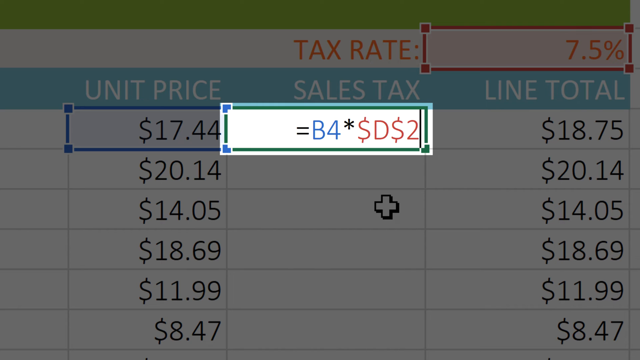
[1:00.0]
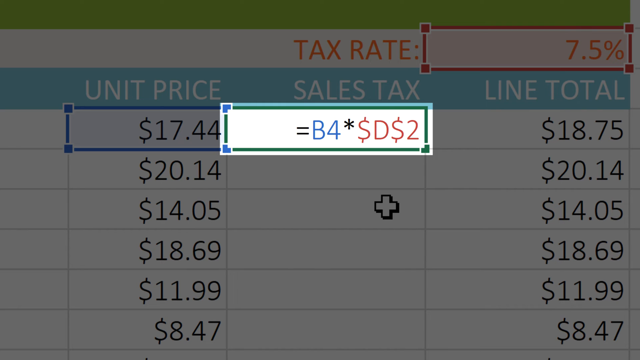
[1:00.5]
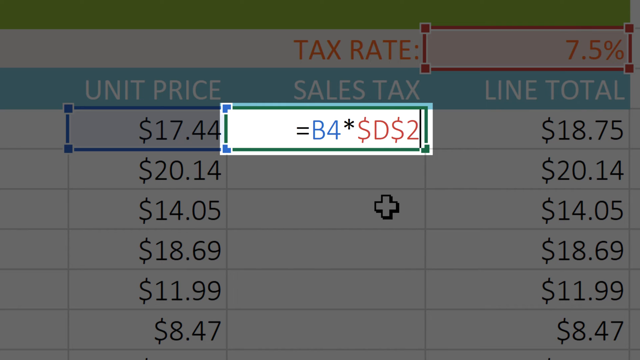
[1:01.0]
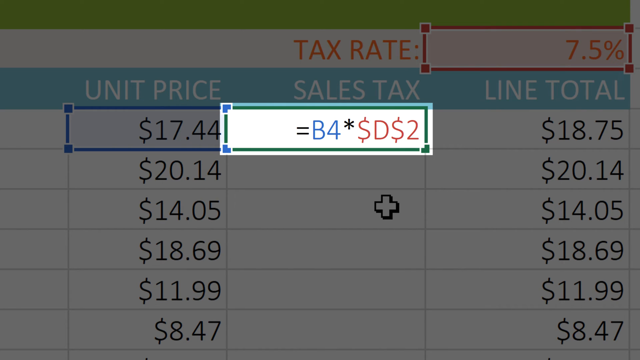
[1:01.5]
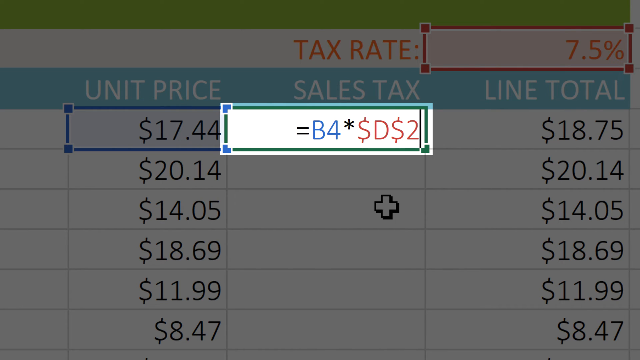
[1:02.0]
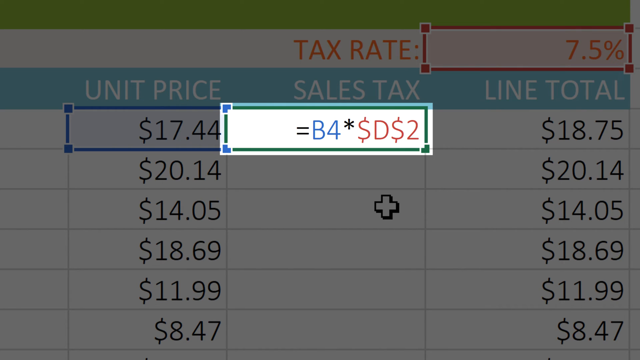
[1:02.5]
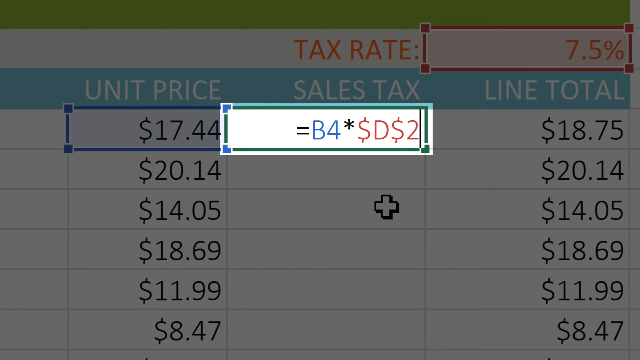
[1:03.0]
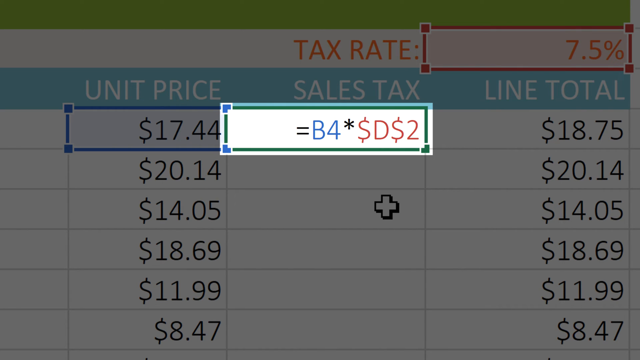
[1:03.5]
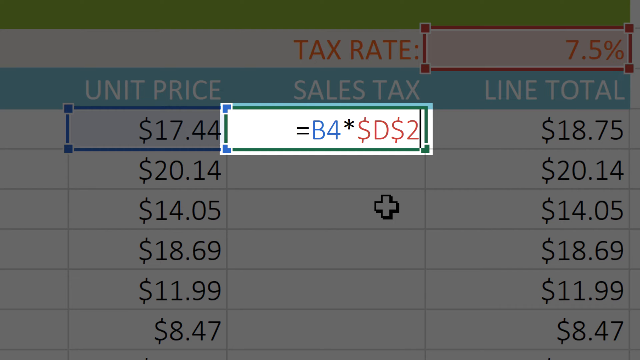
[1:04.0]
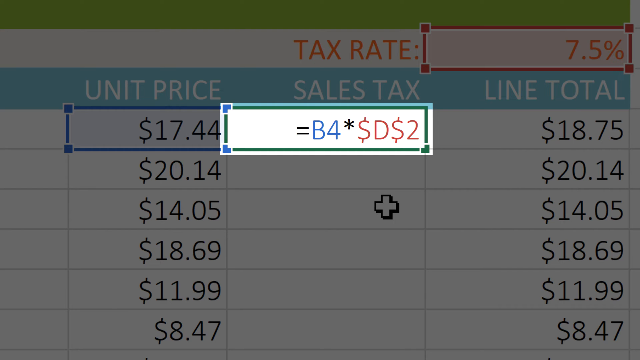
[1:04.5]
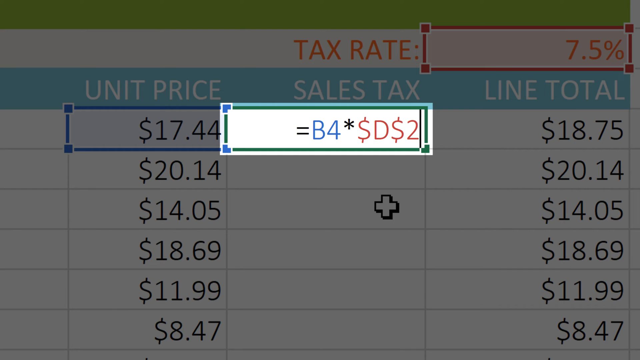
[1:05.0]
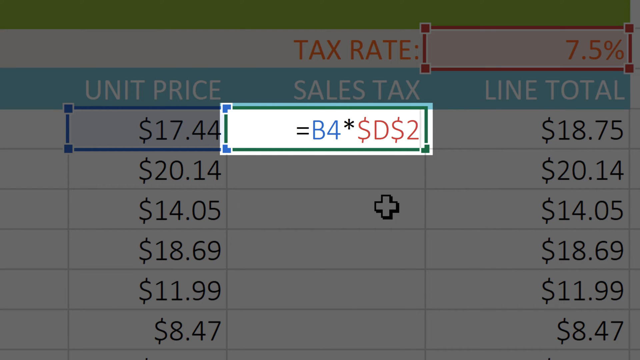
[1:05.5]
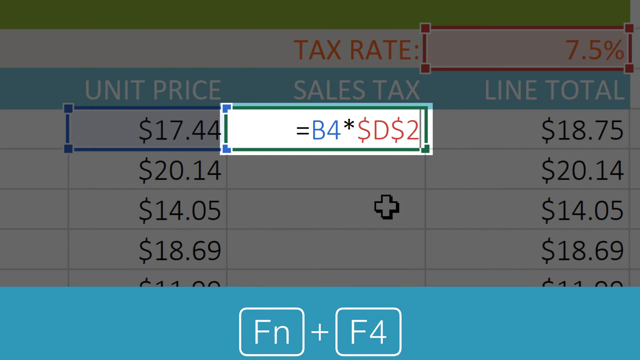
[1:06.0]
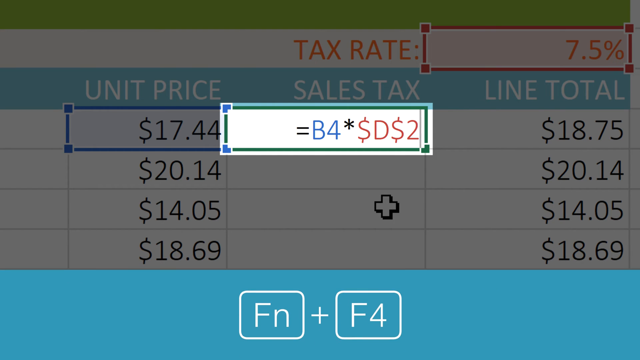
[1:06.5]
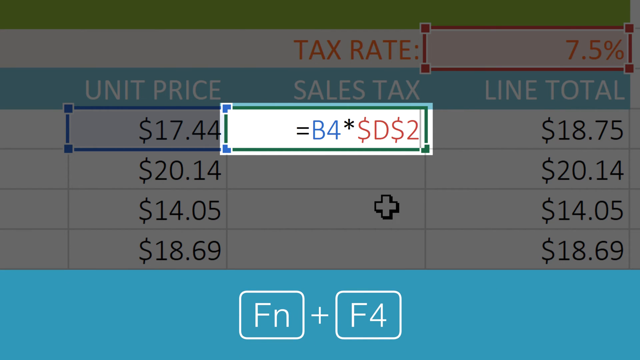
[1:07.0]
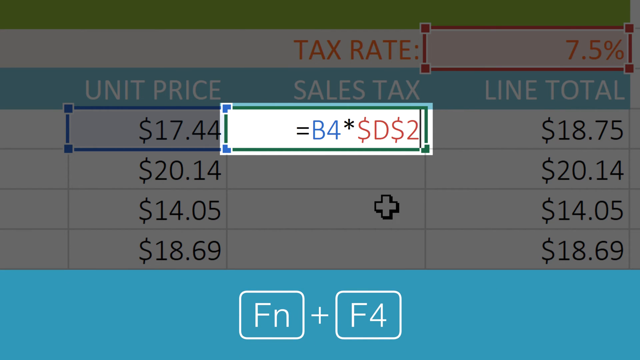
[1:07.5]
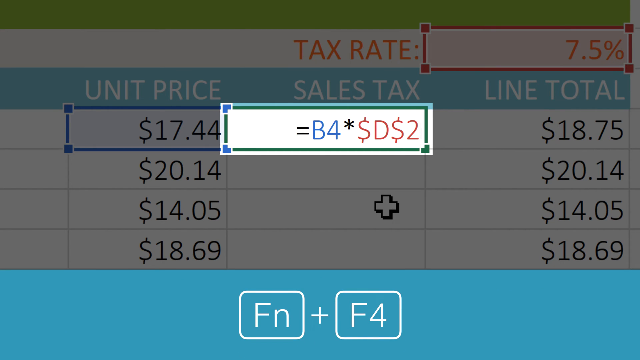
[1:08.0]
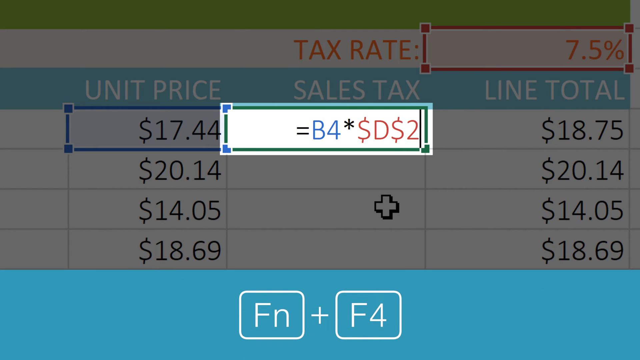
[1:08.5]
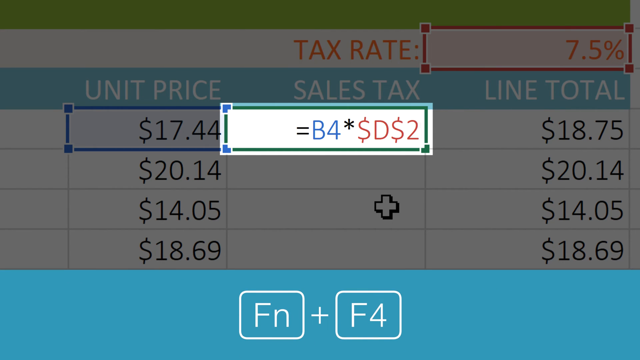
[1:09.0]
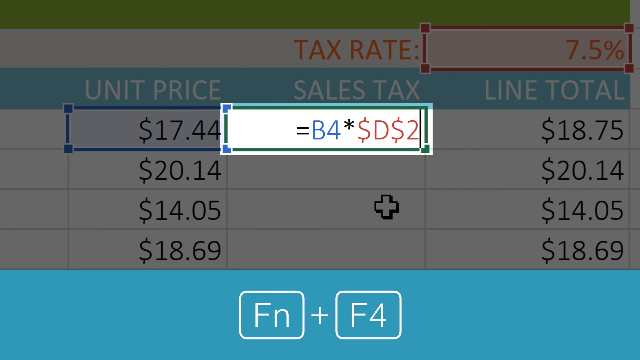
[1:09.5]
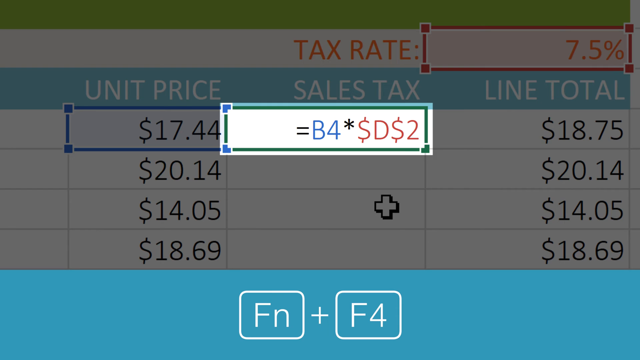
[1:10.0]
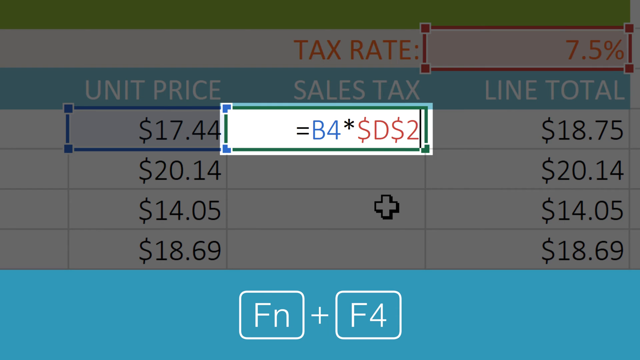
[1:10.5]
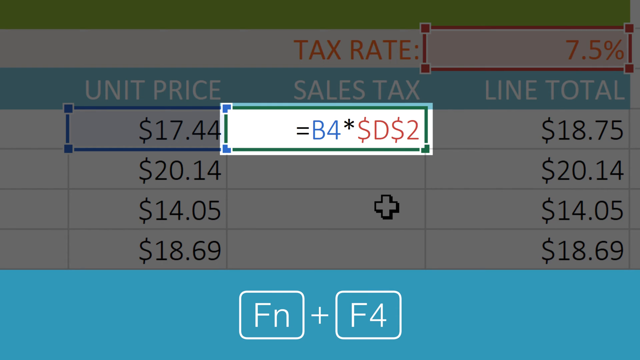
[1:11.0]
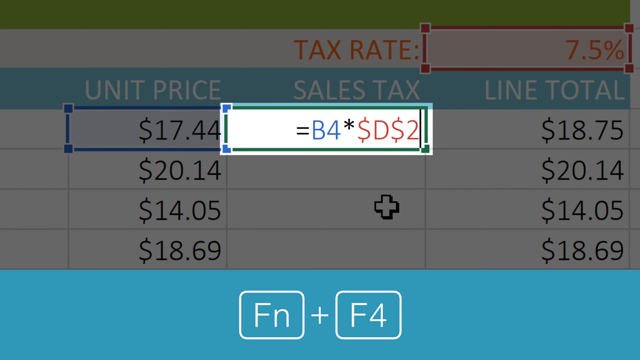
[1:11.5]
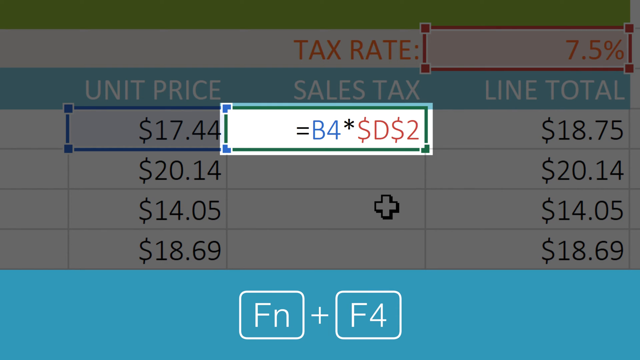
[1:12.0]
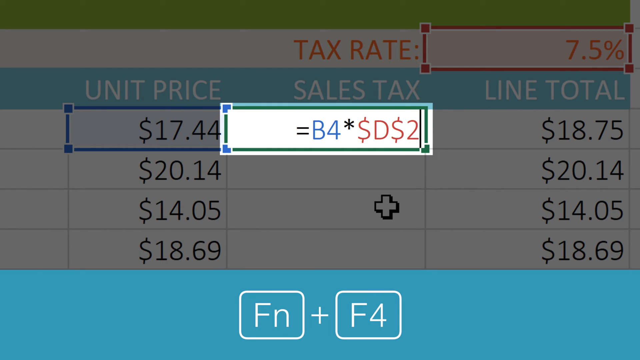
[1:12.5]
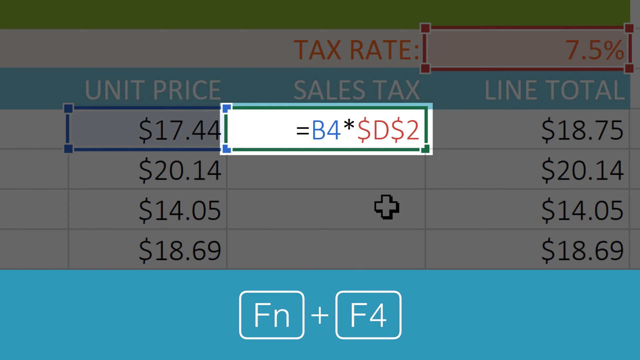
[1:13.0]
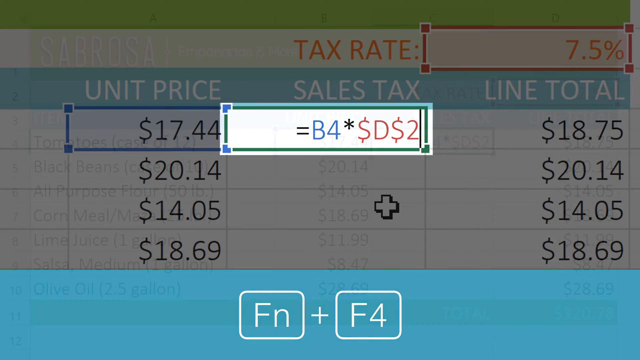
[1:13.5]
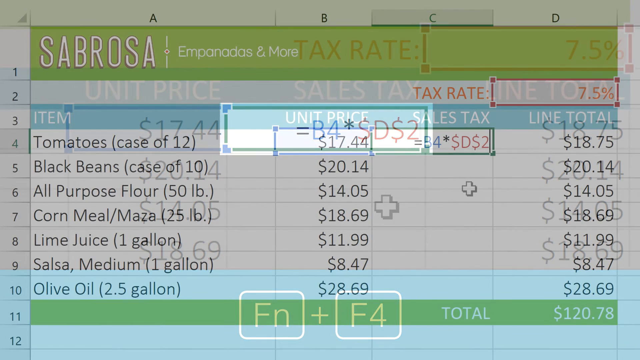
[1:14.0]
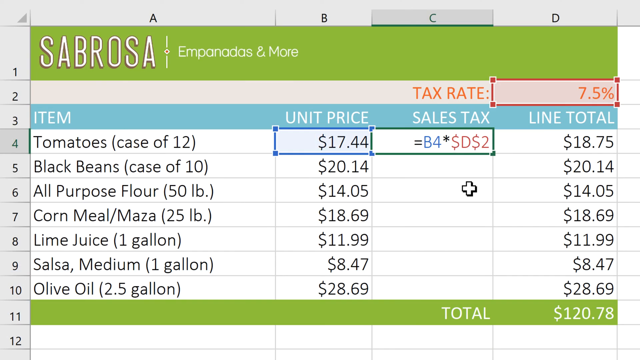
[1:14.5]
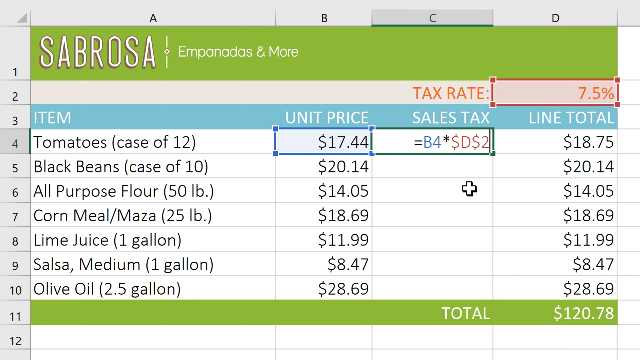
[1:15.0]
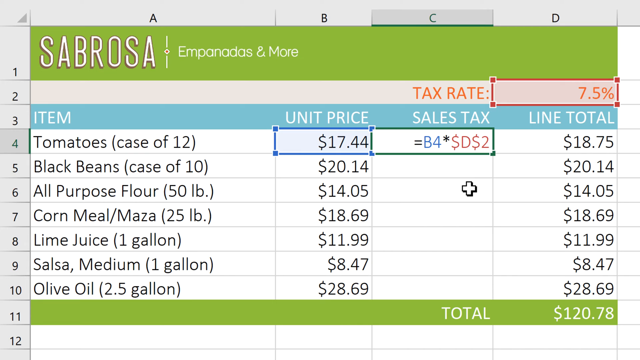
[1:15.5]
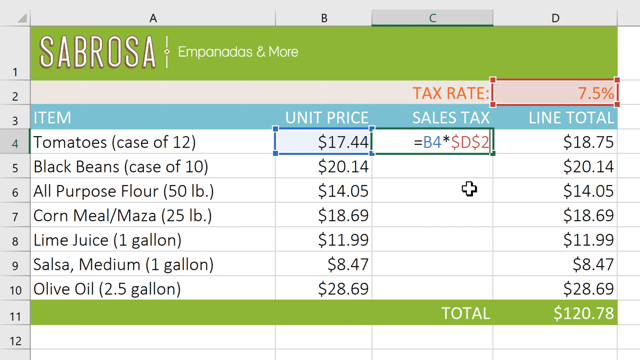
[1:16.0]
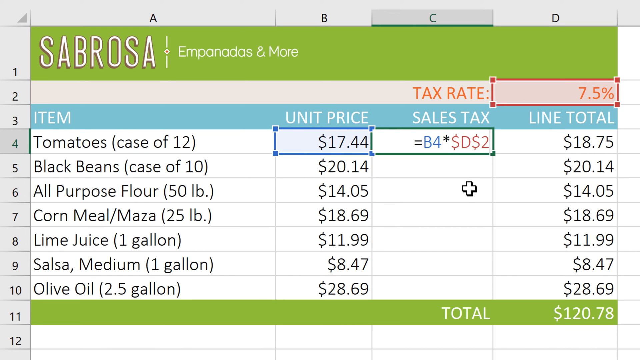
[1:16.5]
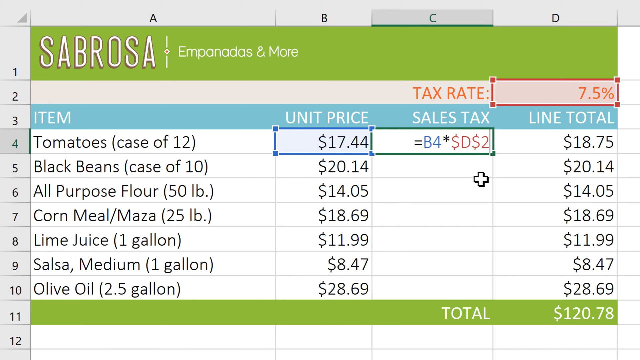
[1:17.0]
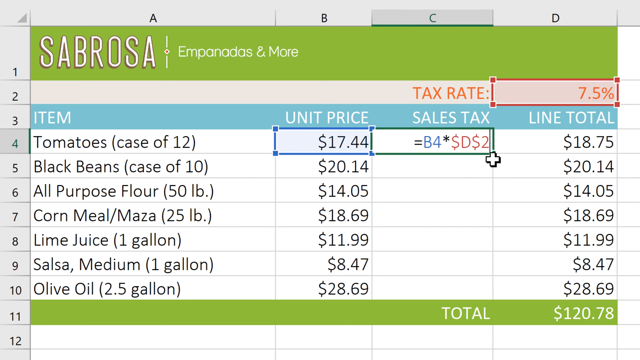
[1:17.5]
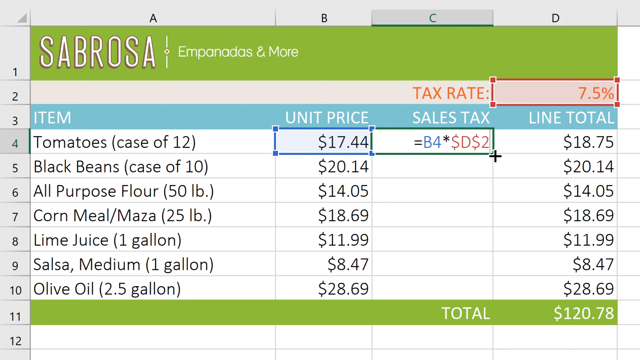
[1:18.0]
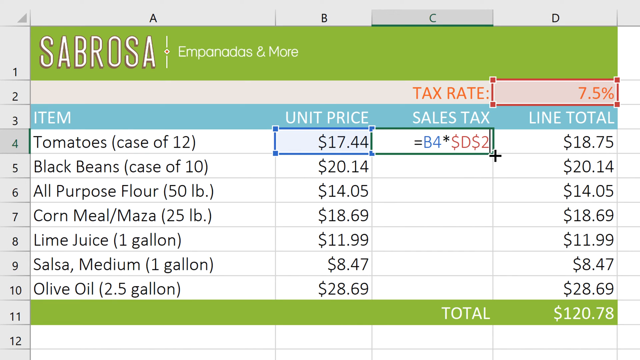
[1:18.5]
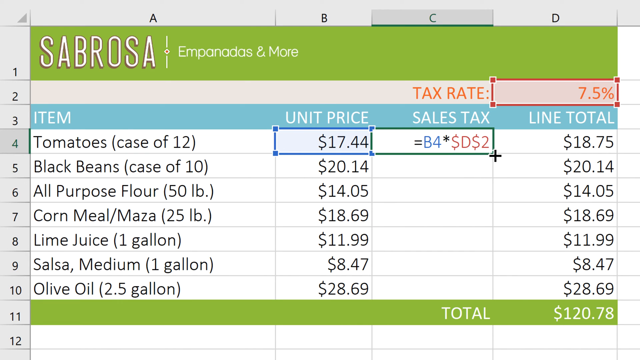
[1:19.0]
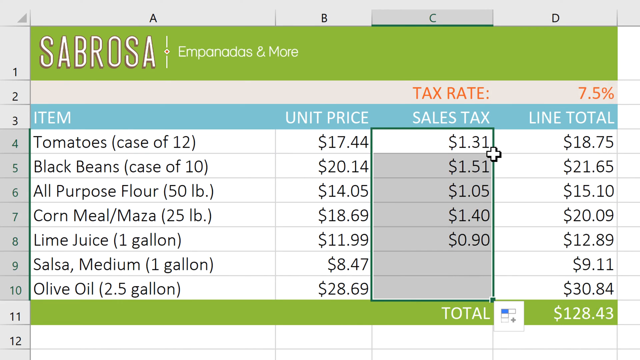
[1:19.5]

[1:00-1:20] Editing is underway, showing B4, a star, a dollar sign with D, then a dollar sign with 2 (B4*$D$2). Beneath that, FN in a square plus F4, also enclosed in a square, are shown. The Sabrosa Empanadas and more table appears again with columns A, B, C and D and listed items: tomatoes, case of 12, with unit price; black beans, case of 10; all-purpose flour; cornmeal or matza; lime juice, one gallon; salsa, medium size, one gallon; and olive oil, 2.5 gallon. The total for all the items is $120.78. The sales tax and line total columns are visible, with line totals of $18.75, $20.14, $14.05, $18.69, $11.99, $8.47, and $28.69 for the olive oil. The cursor moves around, apparently as the page is still being edited.